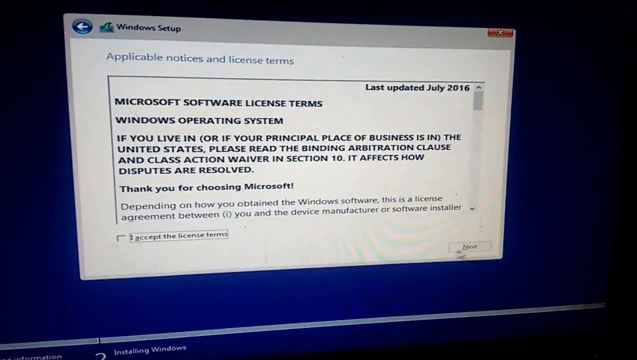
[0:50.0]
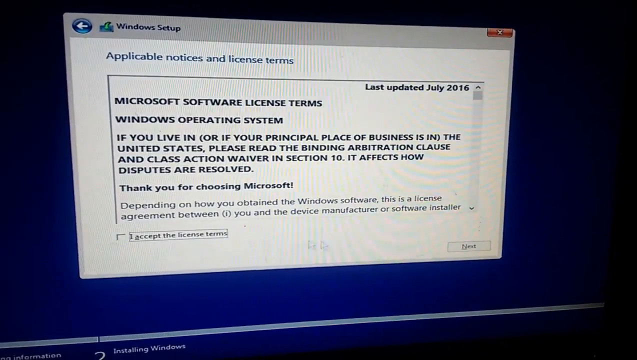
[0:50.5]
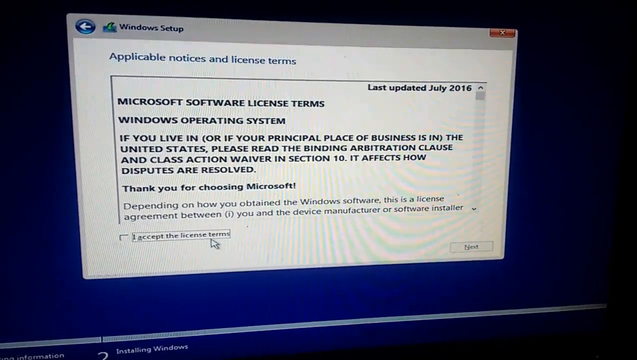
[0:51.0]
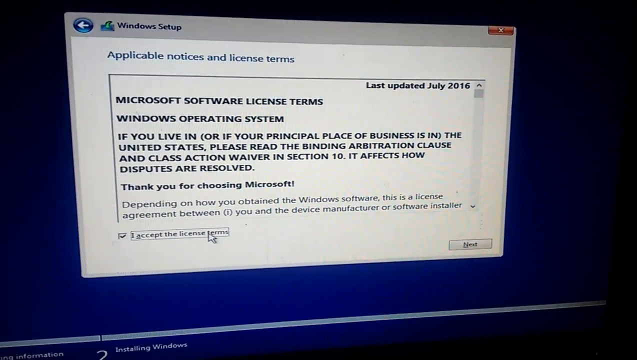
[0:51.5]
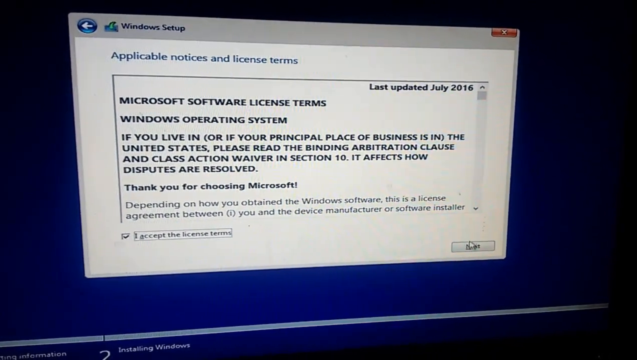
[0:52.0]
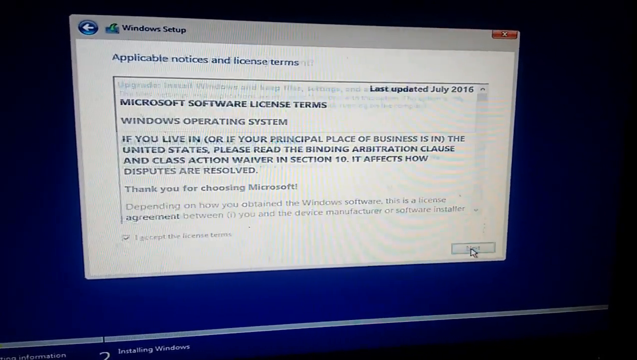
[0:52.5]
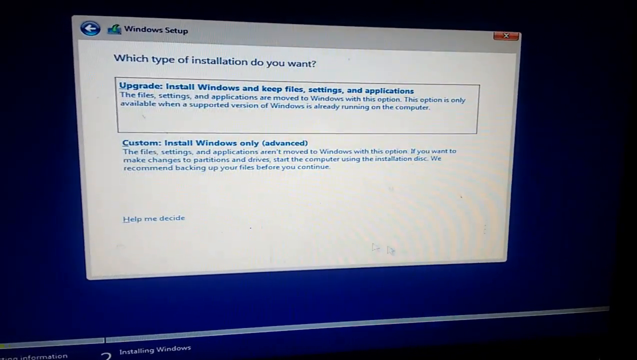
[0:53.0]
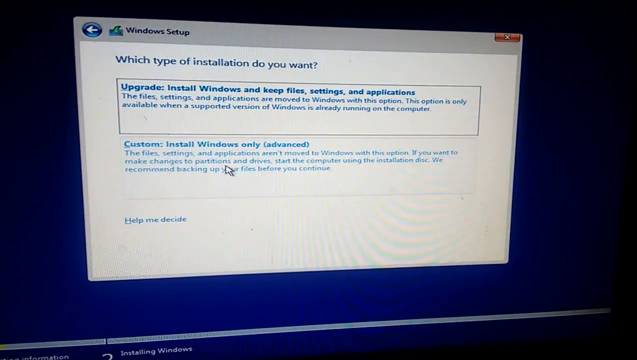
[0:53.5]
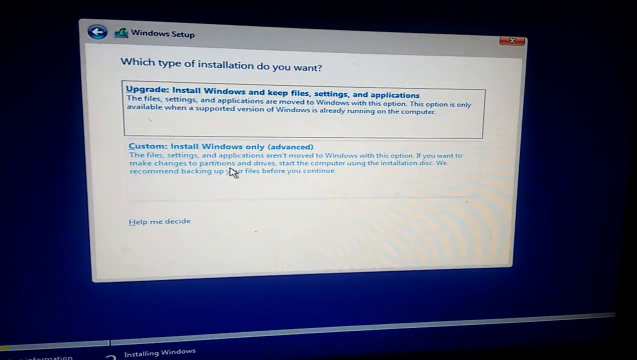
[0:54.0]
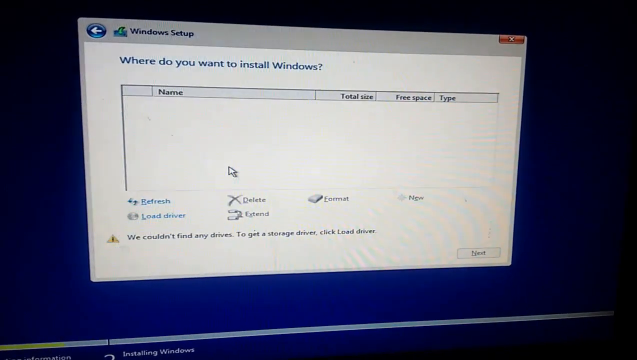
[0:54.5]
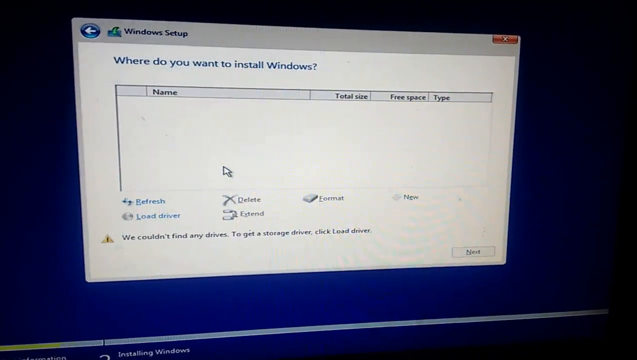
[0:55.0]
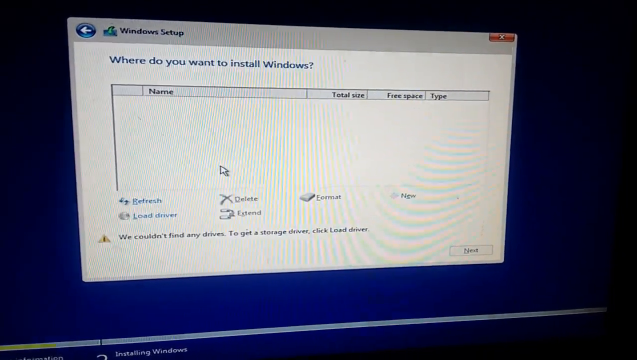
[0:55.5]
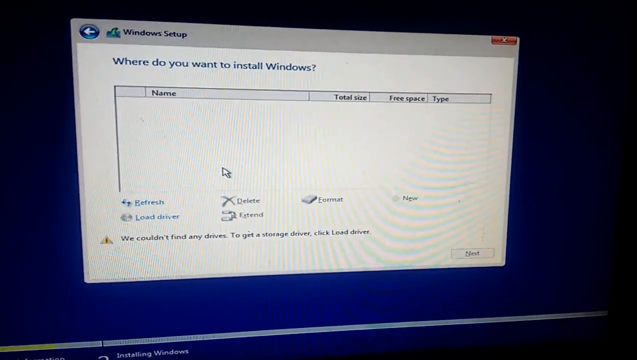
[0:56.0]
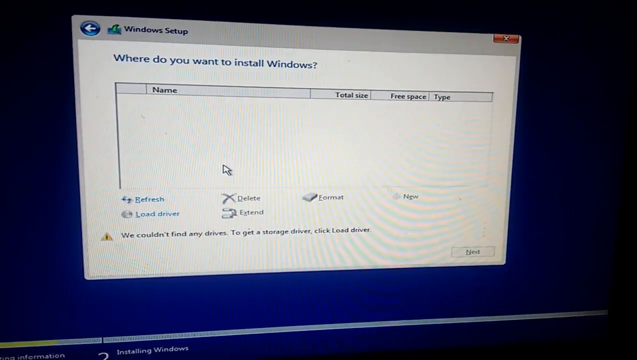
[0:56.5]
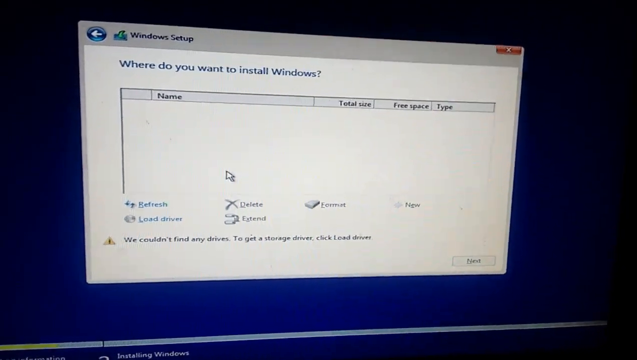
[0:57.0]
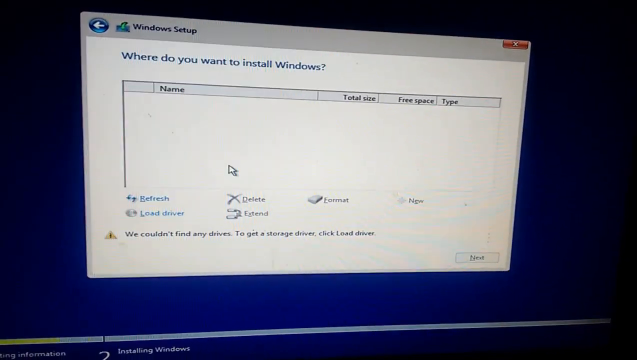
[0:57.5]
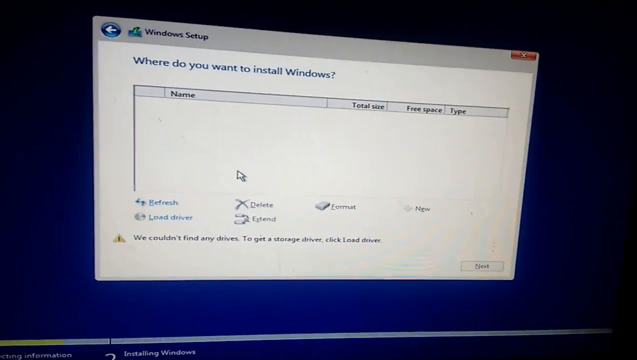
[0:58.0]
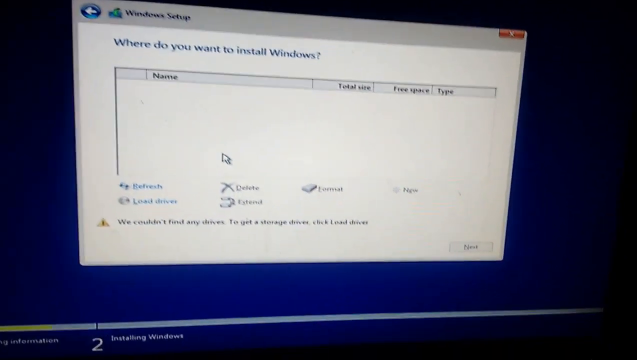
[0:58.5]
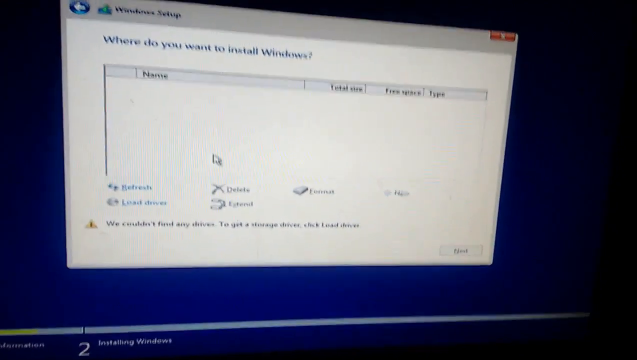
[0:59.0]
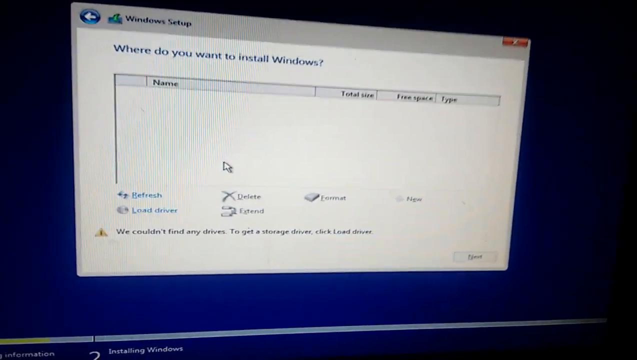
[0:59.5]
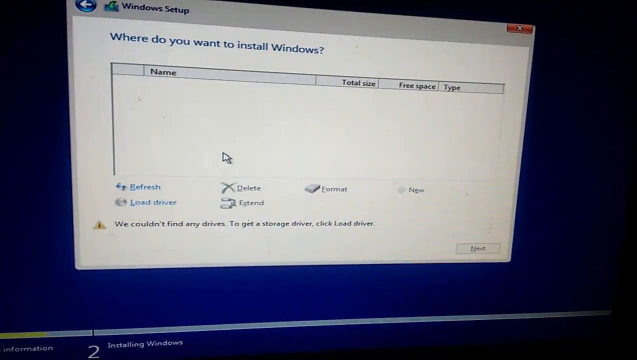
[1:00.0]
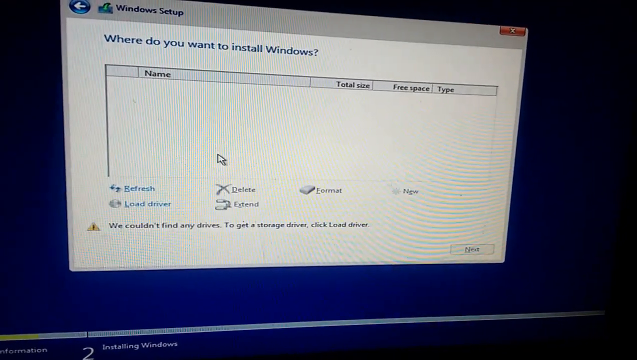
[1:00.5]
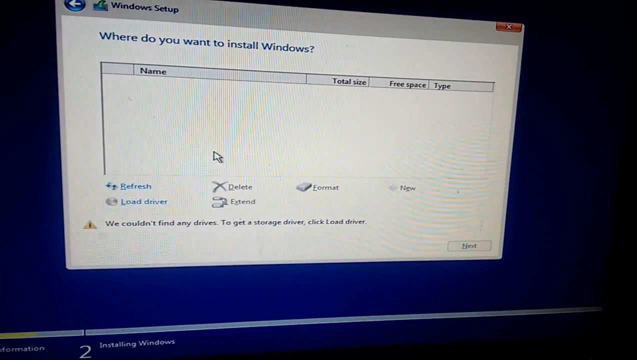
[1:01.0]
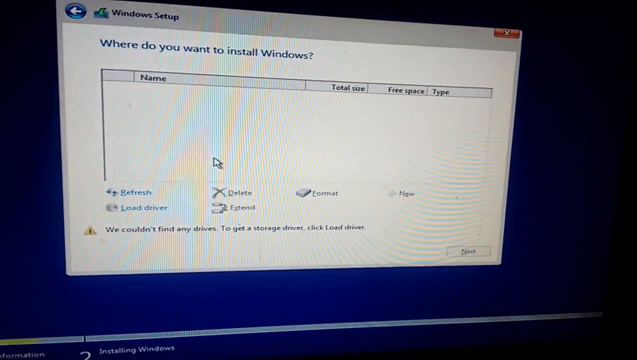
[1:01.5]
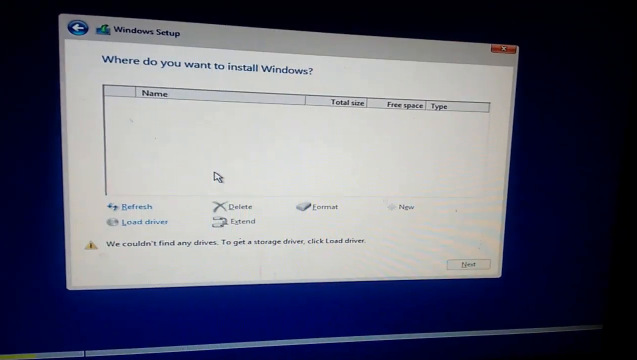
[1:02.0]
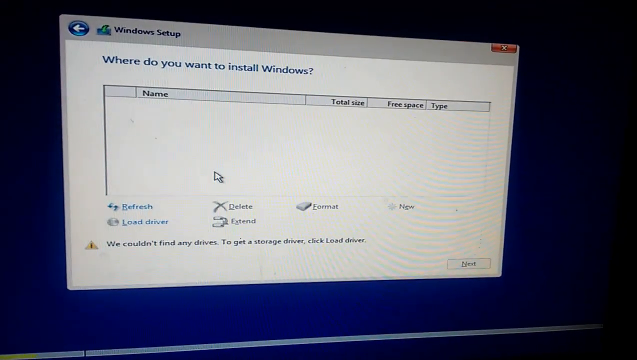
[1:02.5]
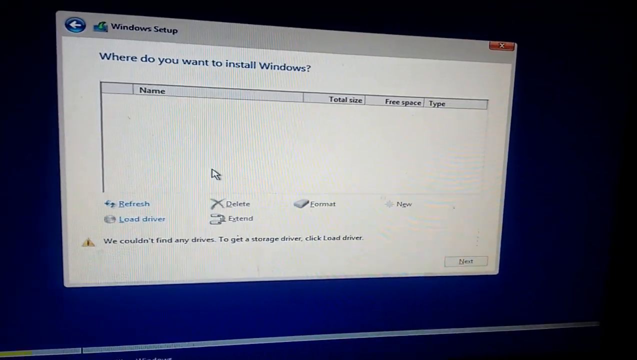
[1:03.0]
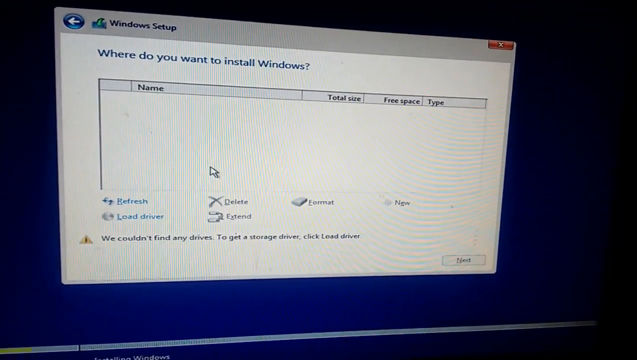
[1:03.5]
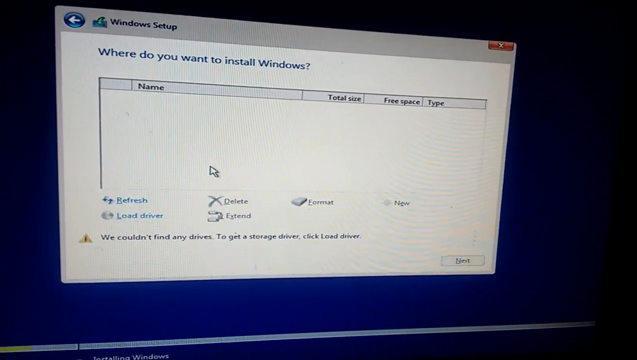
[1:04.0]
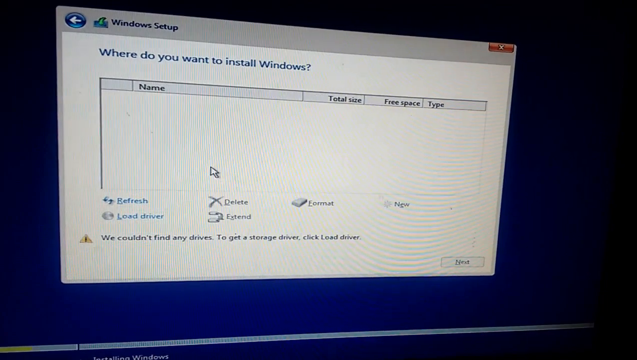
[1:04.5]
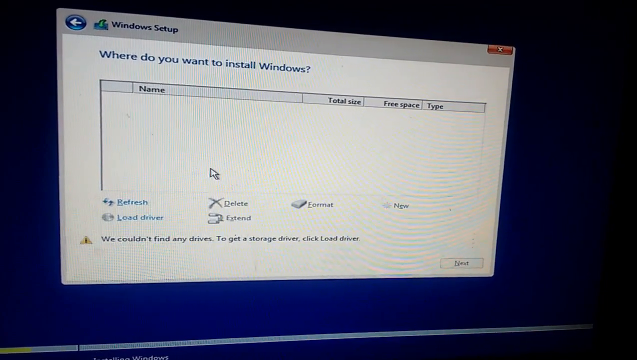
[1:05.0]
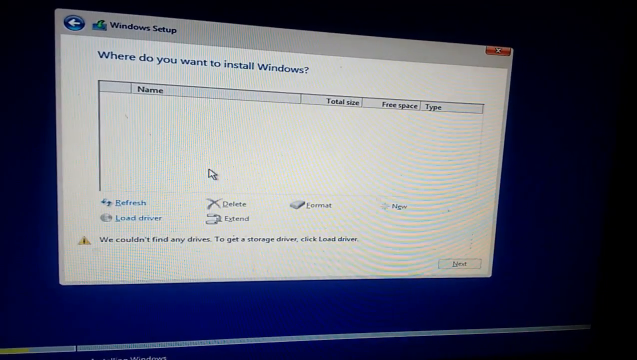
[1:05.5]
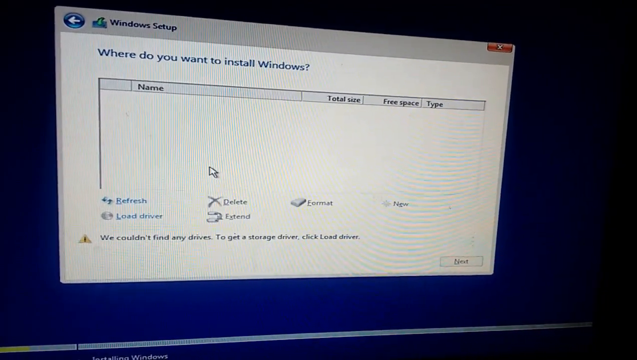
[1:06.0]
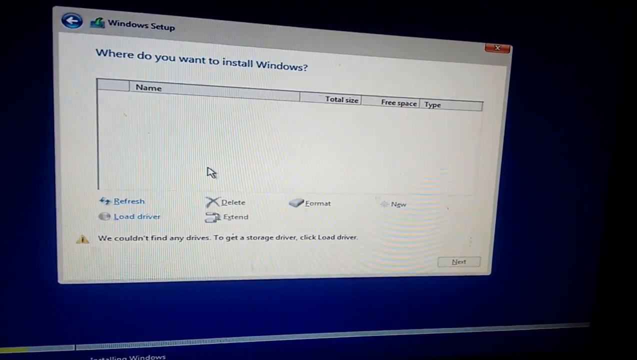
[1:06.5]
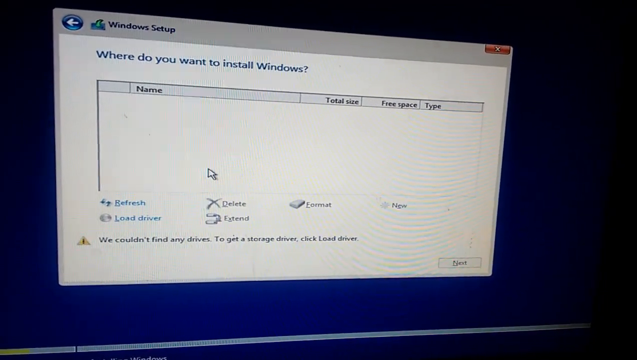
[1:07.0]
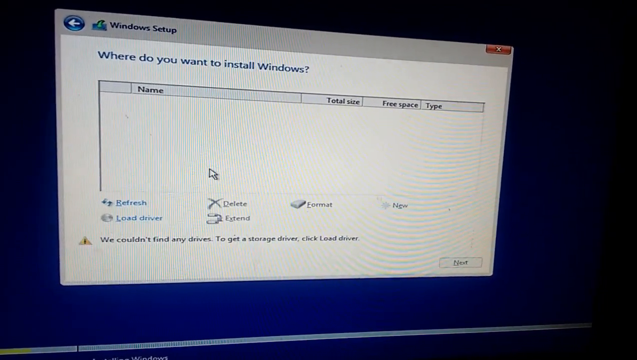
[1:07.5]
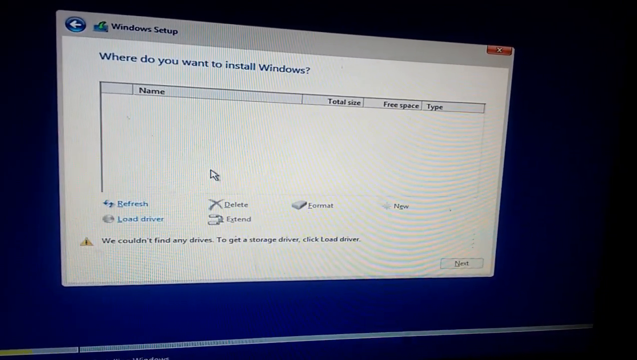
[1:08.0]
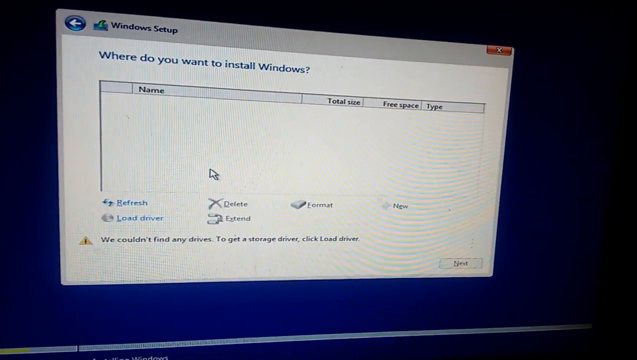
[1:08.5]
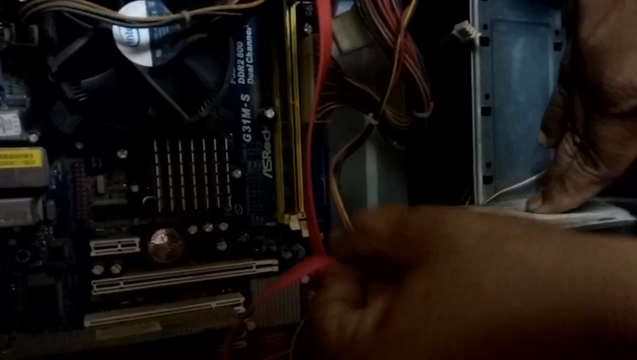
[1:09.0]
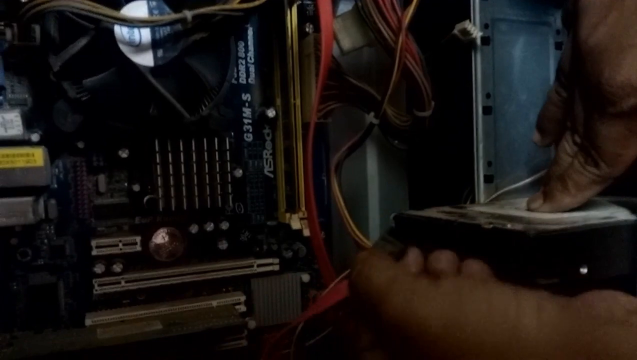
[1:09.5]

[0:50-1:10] A Windows Setup window shows "Applicable notices and license terms," with what looks like a long terms and conditions text for installing the Windows operating system. The scroll bar on the right side shows the text is very long compared with the visible area. The cursor goes to "I accept the license terms" and then clicks OK. The next screen asks which type of installation to choose: "Upgrade," which installs Windows and keeps files, settings and applications, or "Custom," which installs Windows only and is labeled "Advanced" in quotation marks. He chooses the advanced option, and the screen asks "Where do you want to install Windows?" No drives are listed. A small error message with an exclamation icon at the bottom says "We couldn't find any drives." The cursor then stays still, possibly while he reads the screen or figures out what to do next.